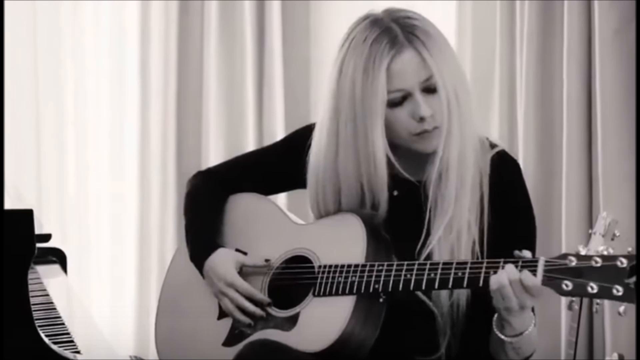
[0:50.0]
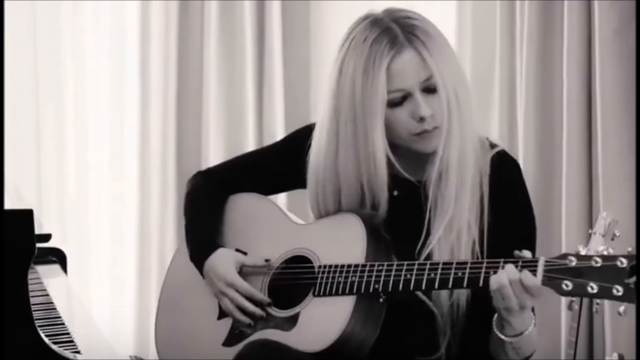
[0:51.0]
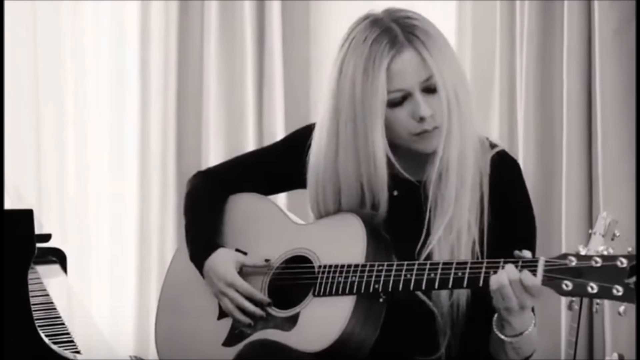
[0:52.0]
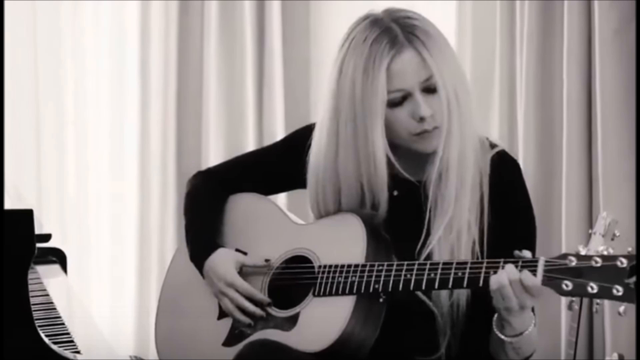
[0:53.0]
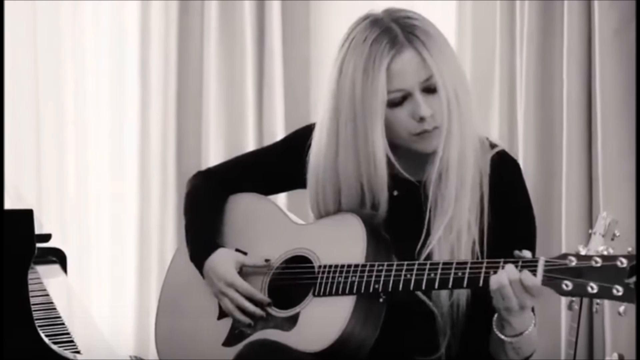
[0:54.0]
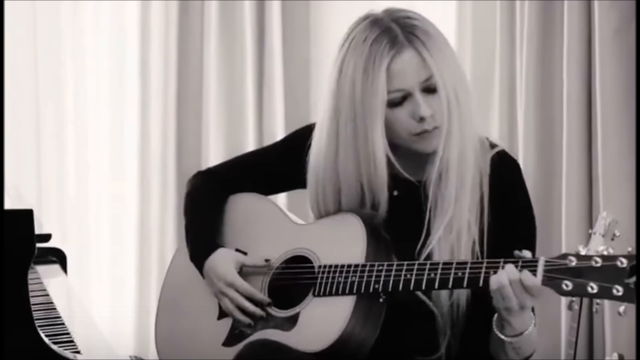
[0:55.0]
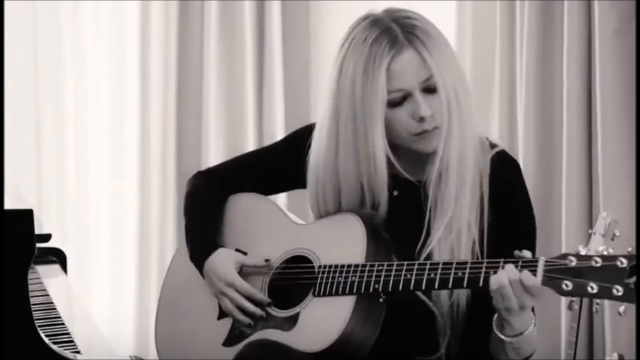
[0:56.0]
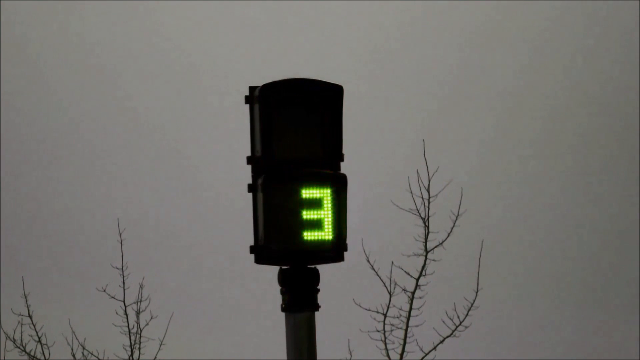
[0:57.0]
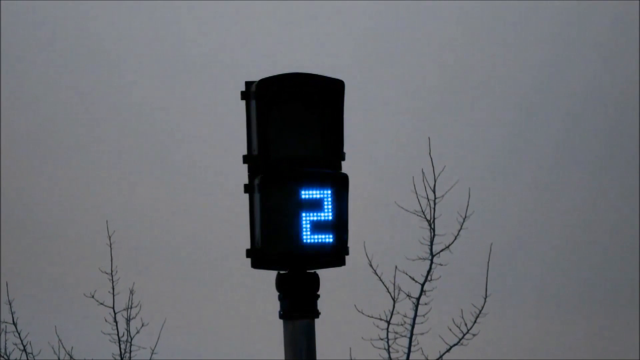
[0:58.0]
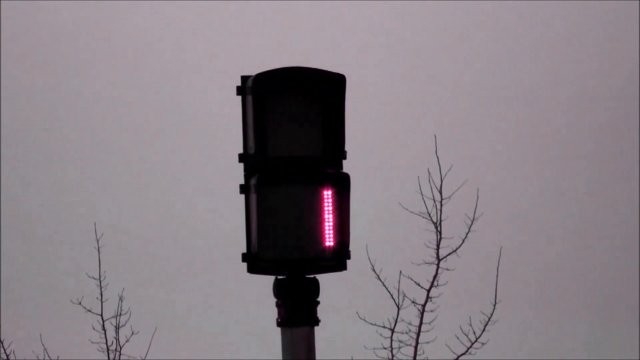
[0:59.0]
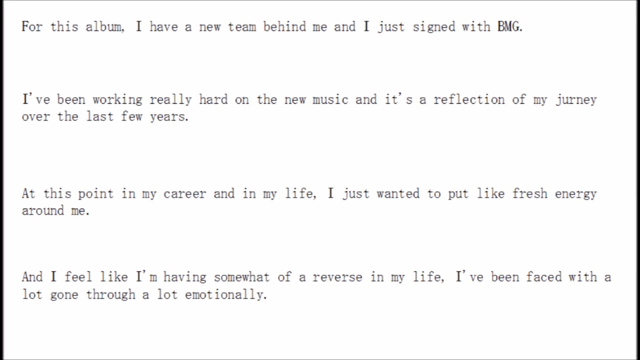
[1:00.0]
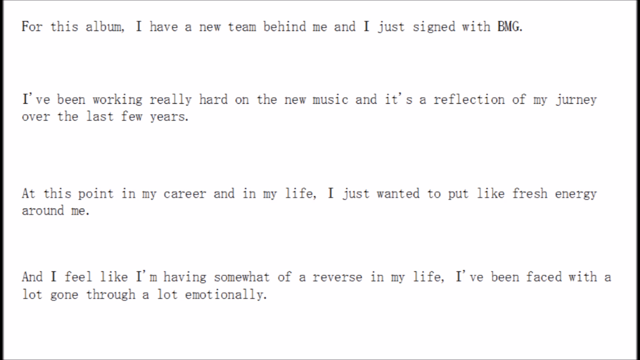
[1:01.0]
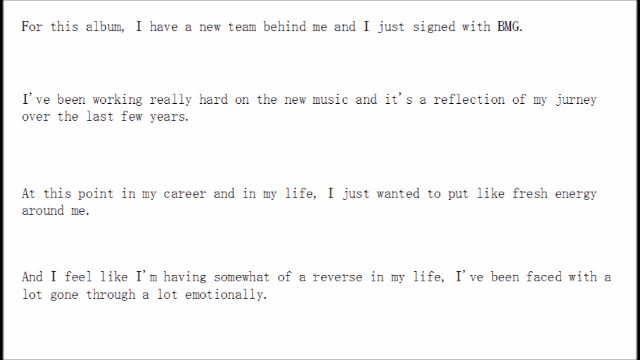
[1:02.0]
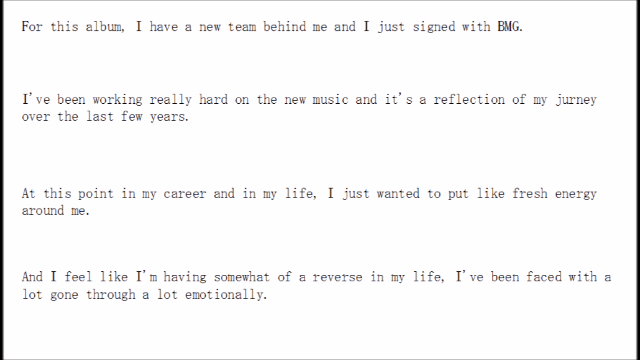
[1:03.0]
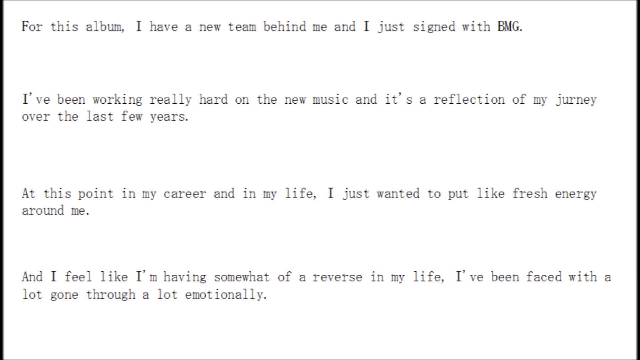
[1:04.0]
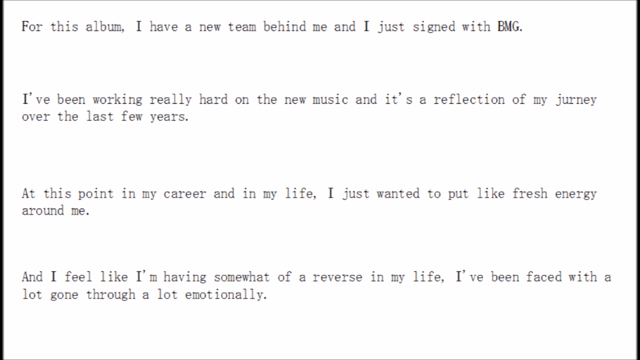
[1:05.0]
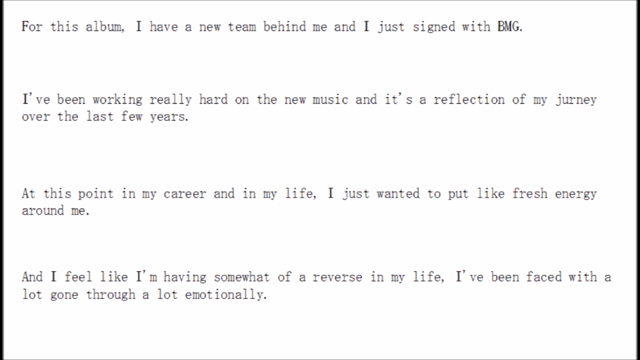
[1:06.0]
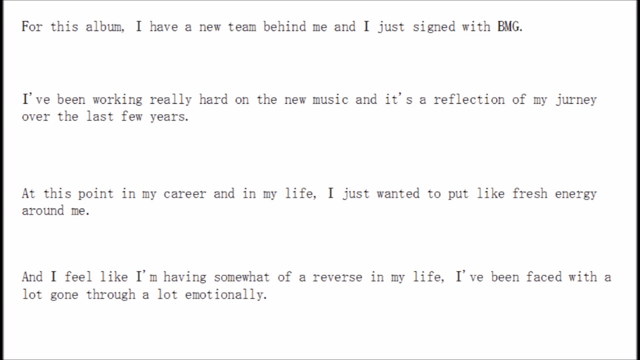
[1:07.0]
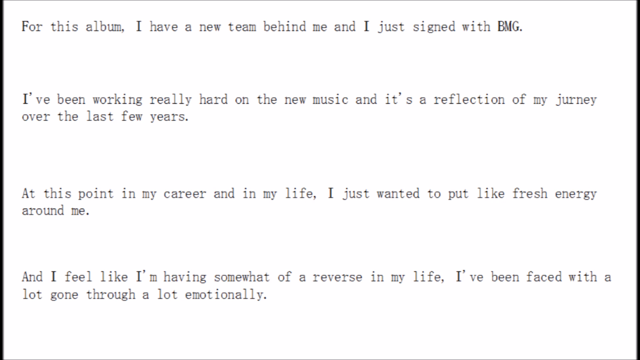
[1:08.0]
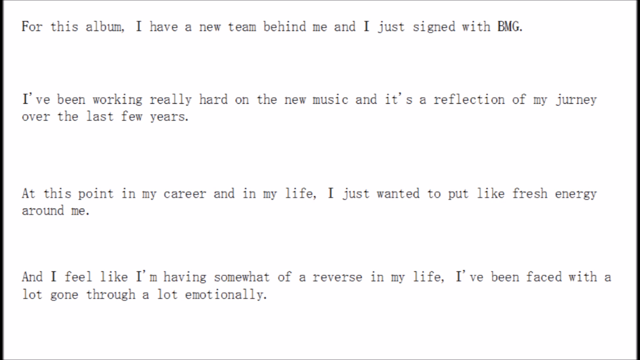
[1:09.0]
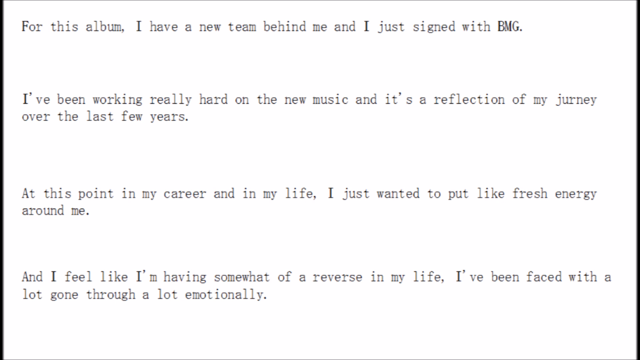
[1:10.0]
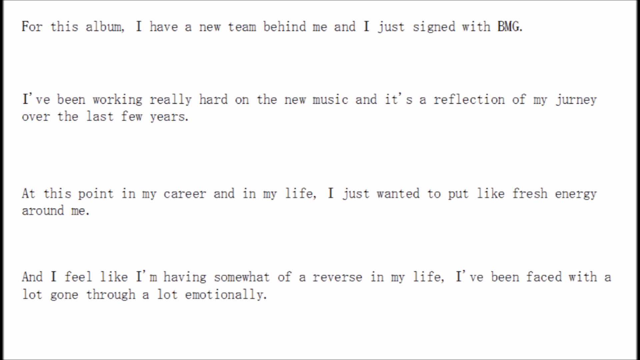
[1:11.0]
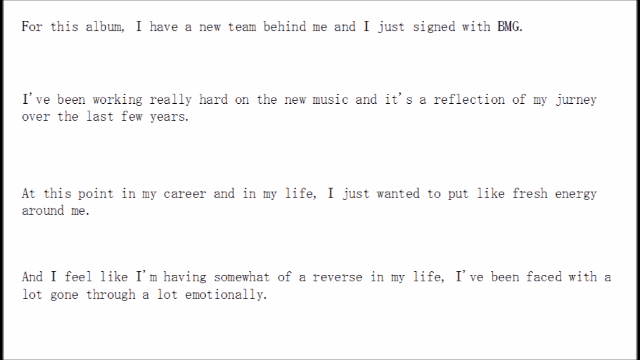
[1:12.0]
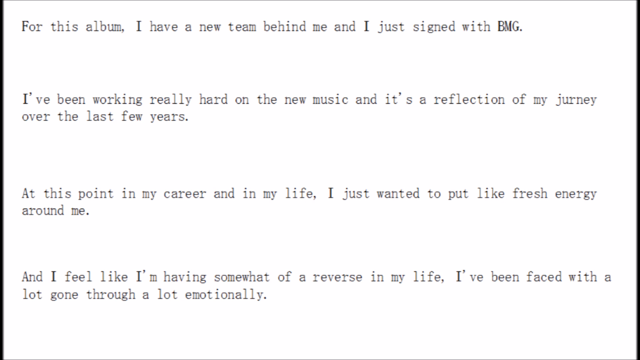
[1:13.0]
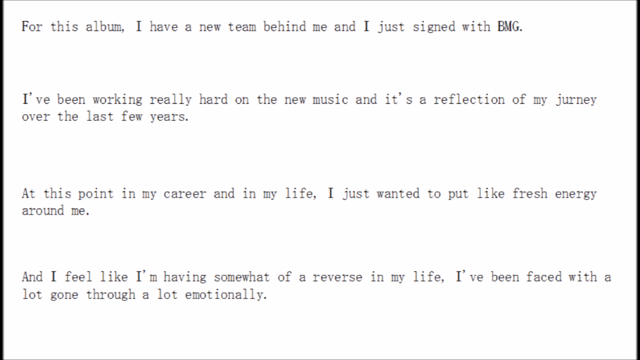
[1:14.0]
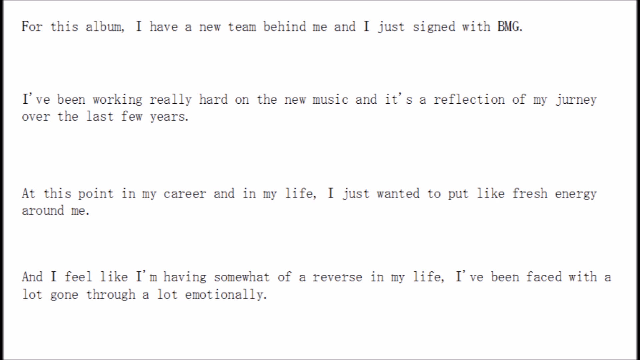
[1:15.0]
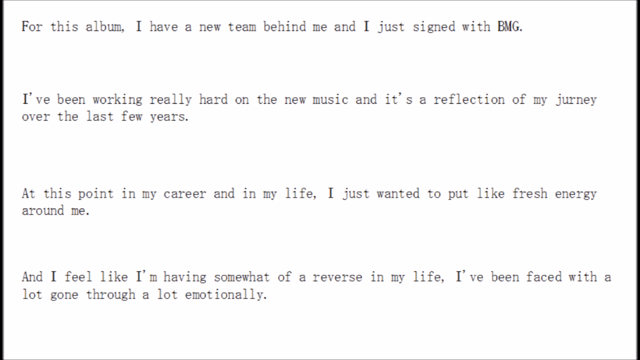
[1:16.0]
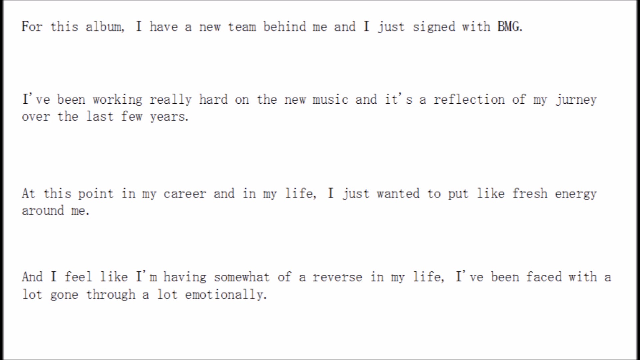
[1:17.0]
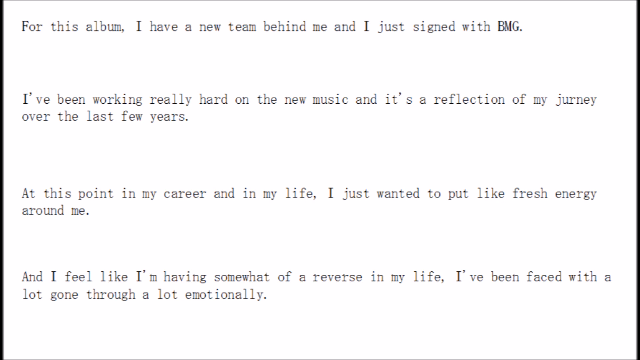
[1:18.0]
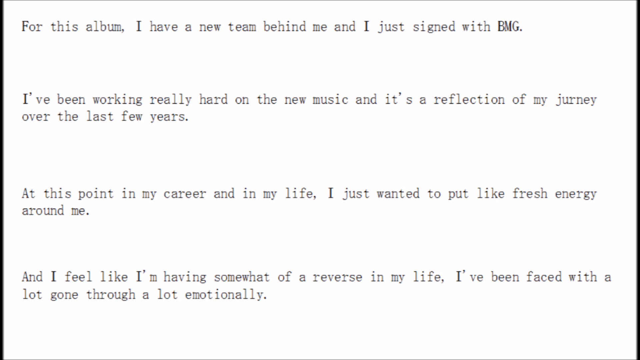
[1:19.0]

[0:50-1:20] A still shot shows Avril Lavigne playing an acoustic guitar, selecting the chords with her left hand and strumming with her right thumb. She wears a black long-sleeve top and is sitting next to a piano whose keys are black and white; the piano cover is open. Sheer, see-through curtains are behind her, and there appears to be another guitar on a rest to her left. The video then goes back to the pedestrian countdown sign. It starts at three with a flashing stop hand, is orange at three, turns green as it goes to two, and turns blue and then purple as it goes to one. Trees are visible behind it, and the sky is gray and hazy. Next, text appears on the screen, apparently a transcript of an interview. It reads: "this album, I have a new team behind me and I just signed with BMG. I've been working really hard on the new music and it's a reflection of my journey over the last few years. At this point in my career, in my life, I just wanted to put like fresh energy around me. And I feel like I'm having somewhat of a reverse in my life. I've been faced with a lot, gone through a lot emotionally."